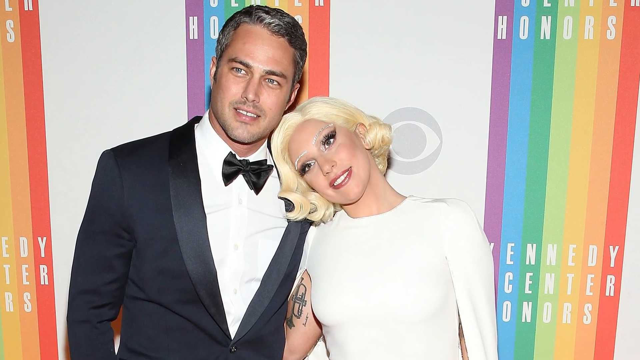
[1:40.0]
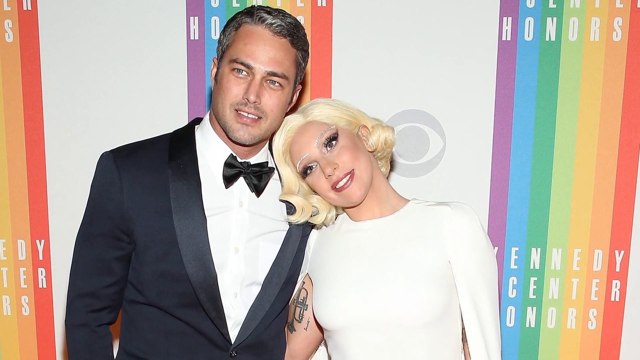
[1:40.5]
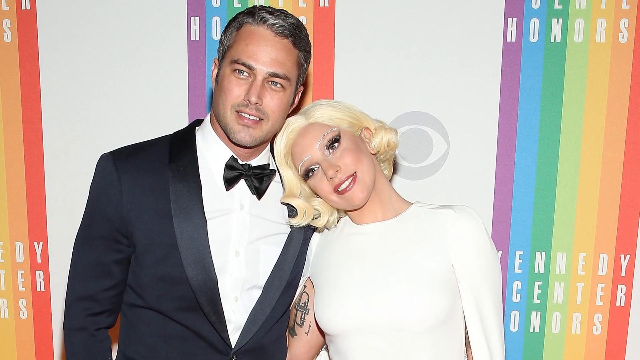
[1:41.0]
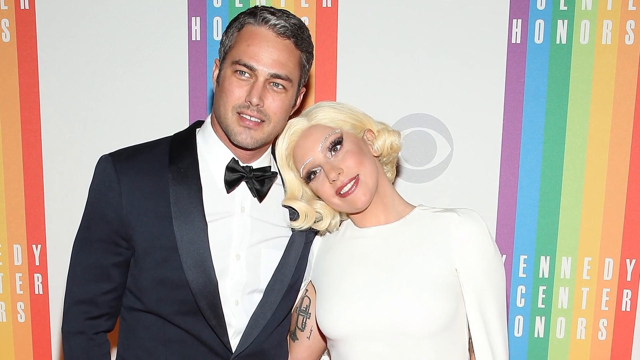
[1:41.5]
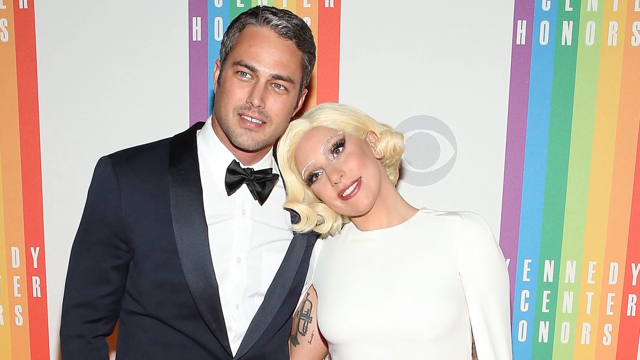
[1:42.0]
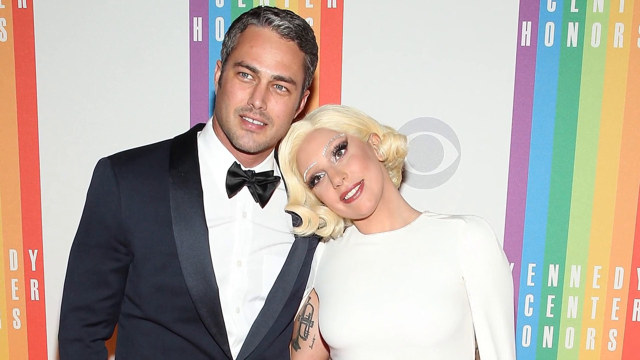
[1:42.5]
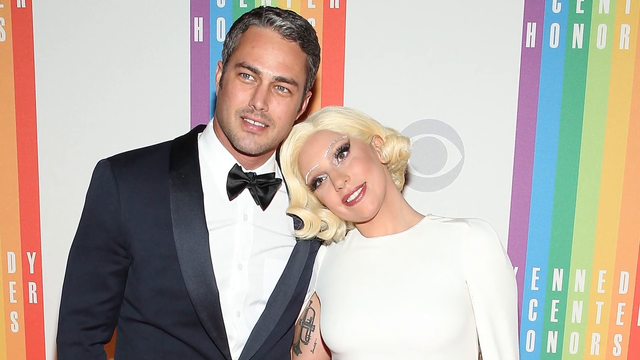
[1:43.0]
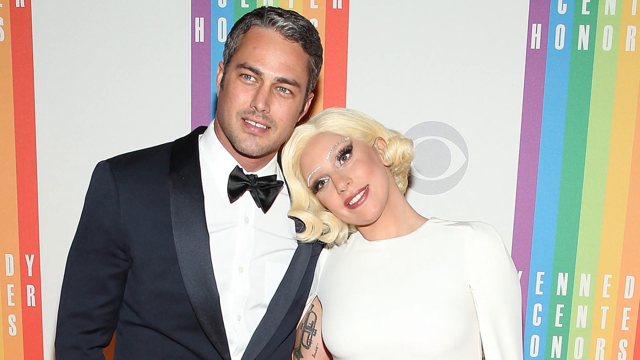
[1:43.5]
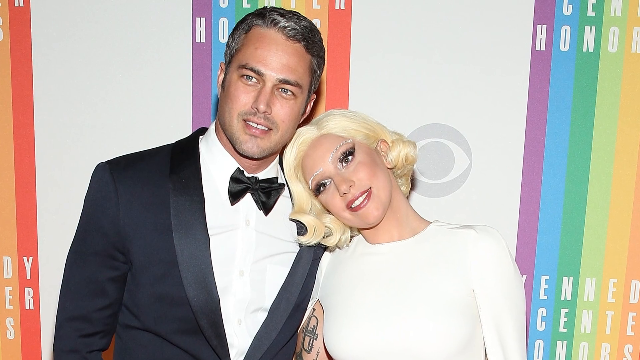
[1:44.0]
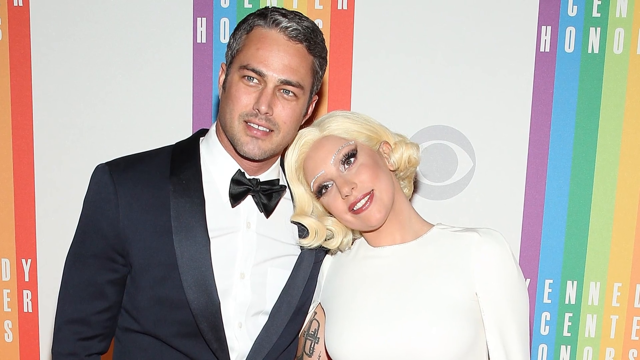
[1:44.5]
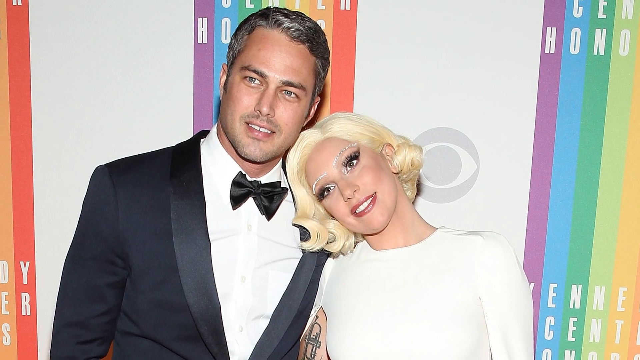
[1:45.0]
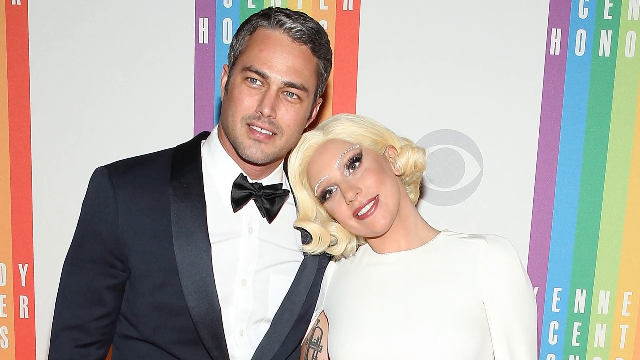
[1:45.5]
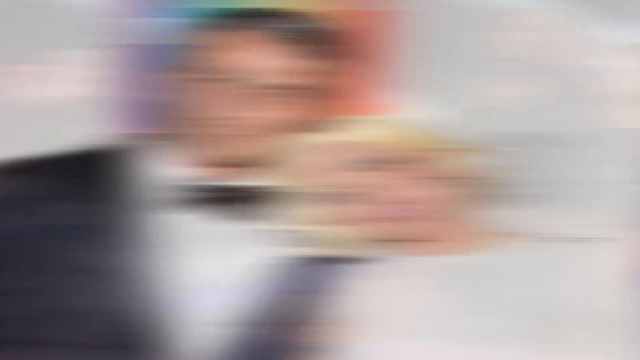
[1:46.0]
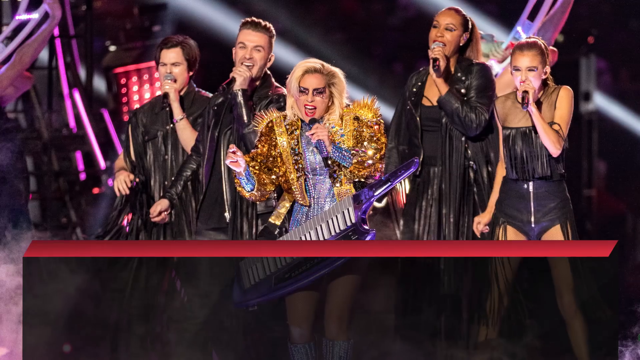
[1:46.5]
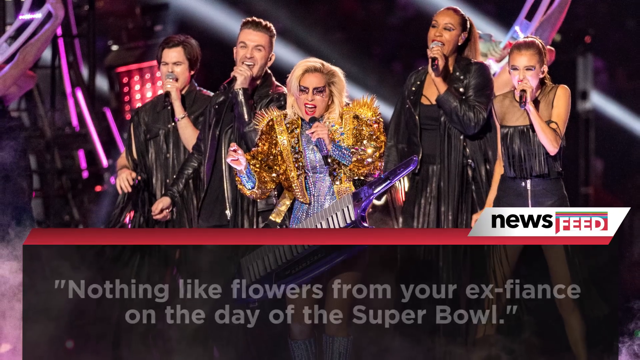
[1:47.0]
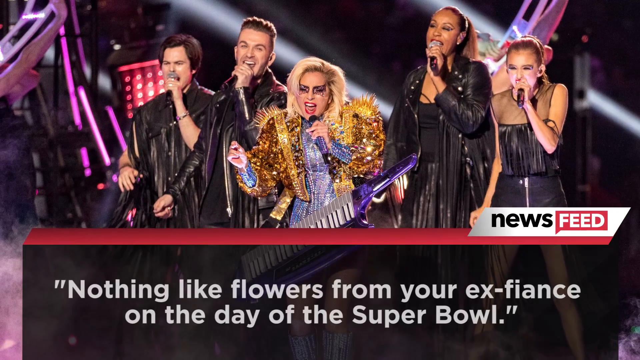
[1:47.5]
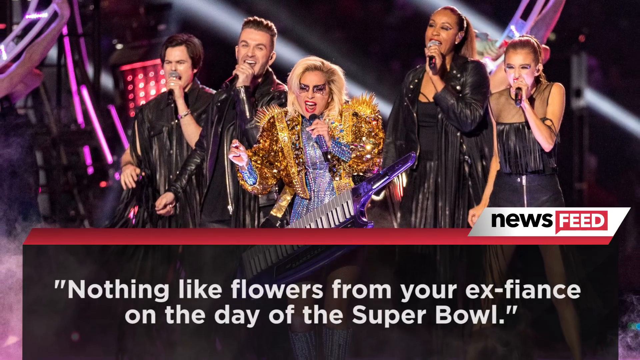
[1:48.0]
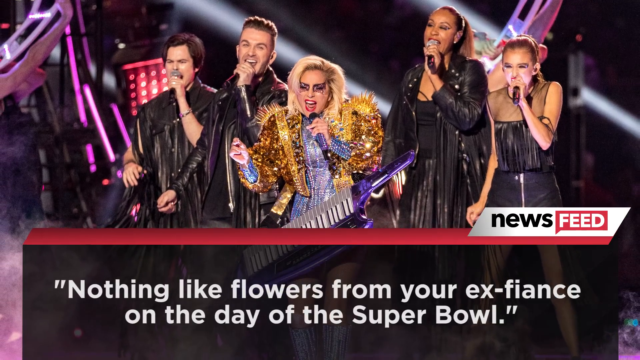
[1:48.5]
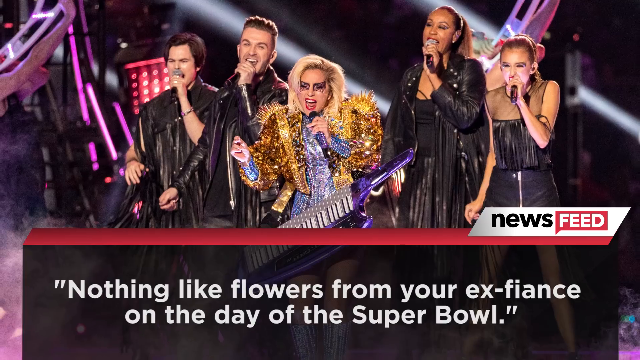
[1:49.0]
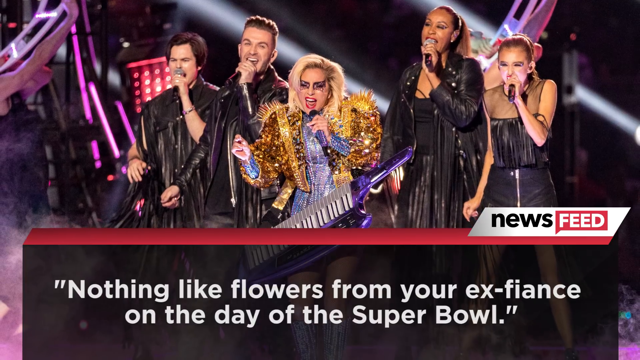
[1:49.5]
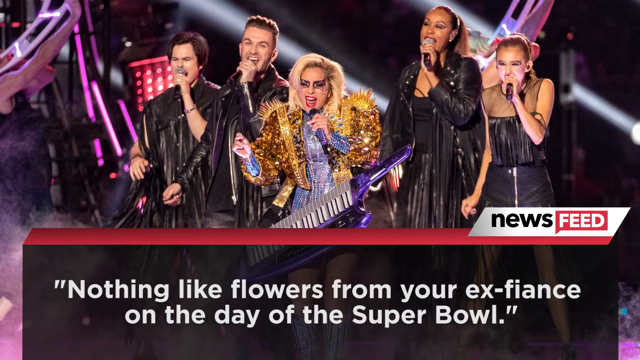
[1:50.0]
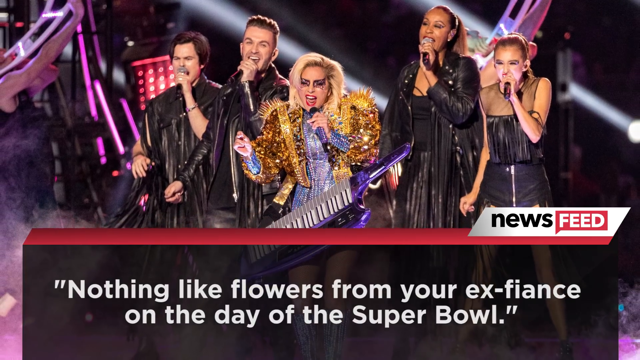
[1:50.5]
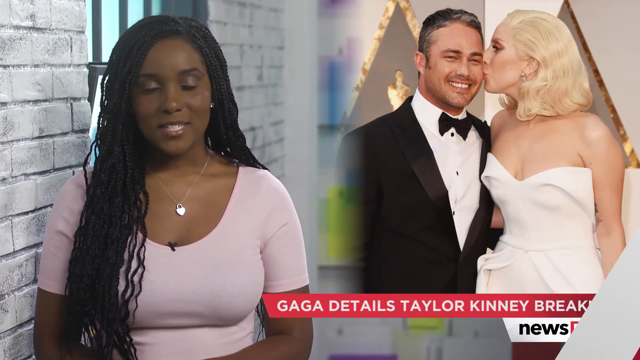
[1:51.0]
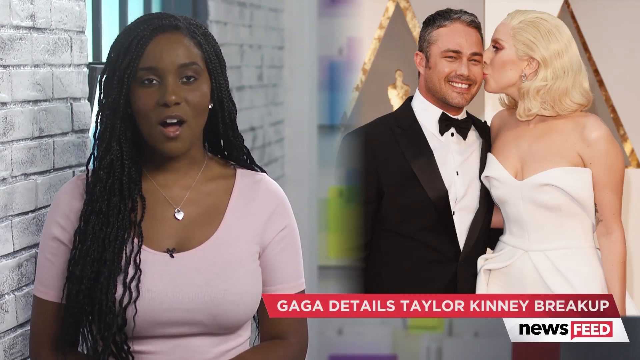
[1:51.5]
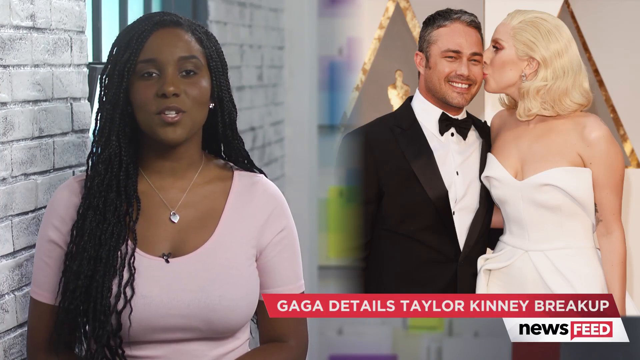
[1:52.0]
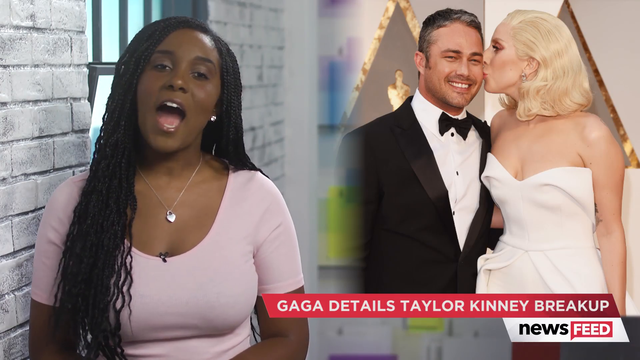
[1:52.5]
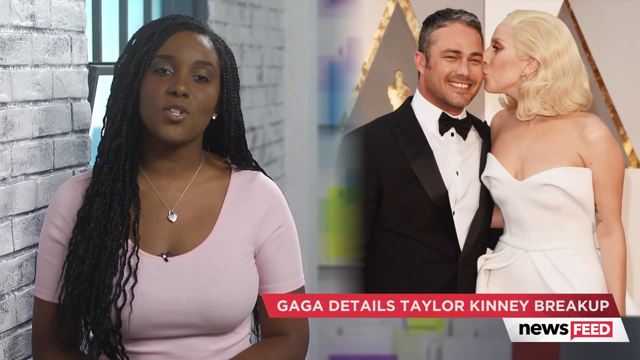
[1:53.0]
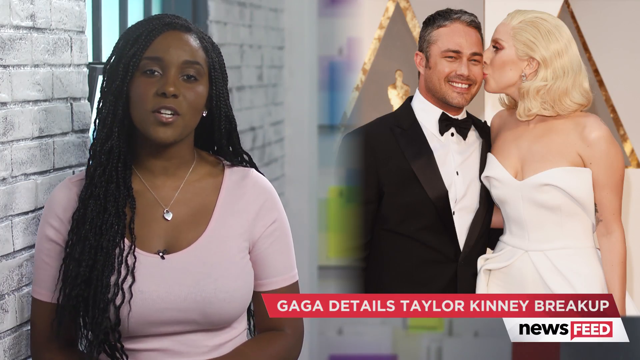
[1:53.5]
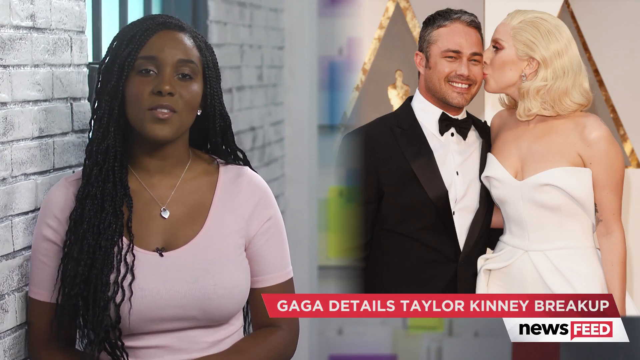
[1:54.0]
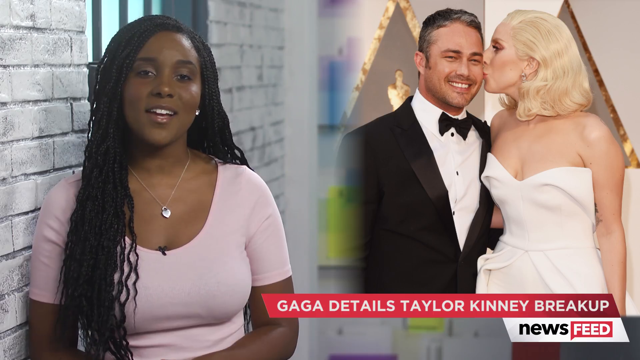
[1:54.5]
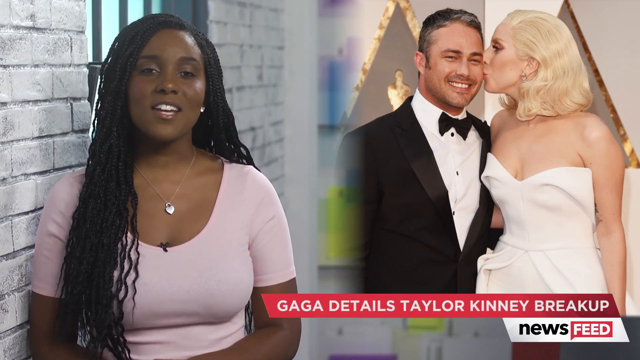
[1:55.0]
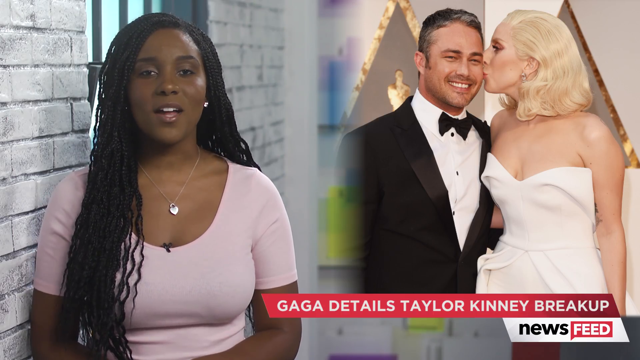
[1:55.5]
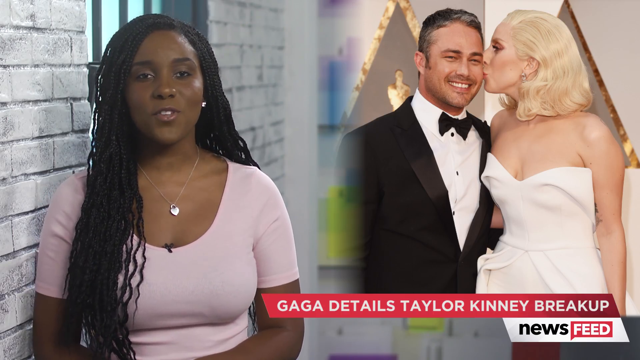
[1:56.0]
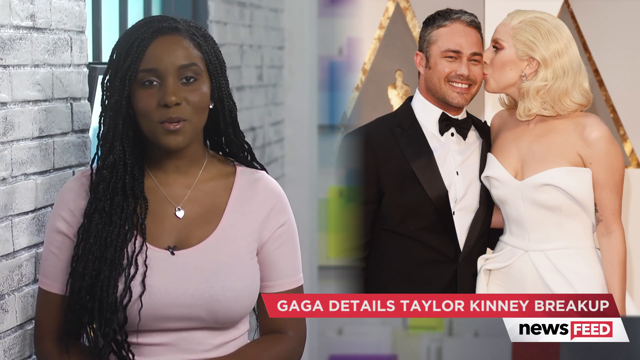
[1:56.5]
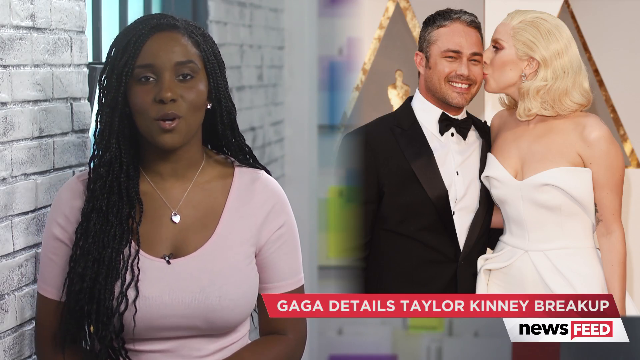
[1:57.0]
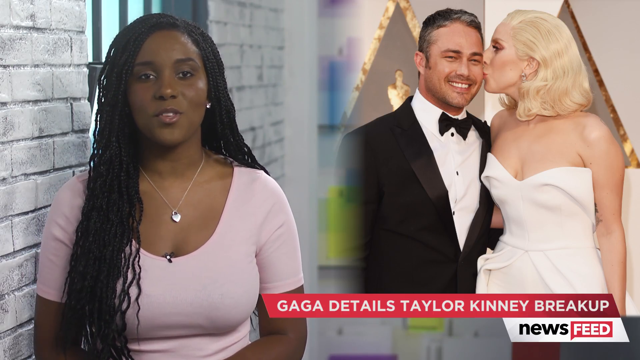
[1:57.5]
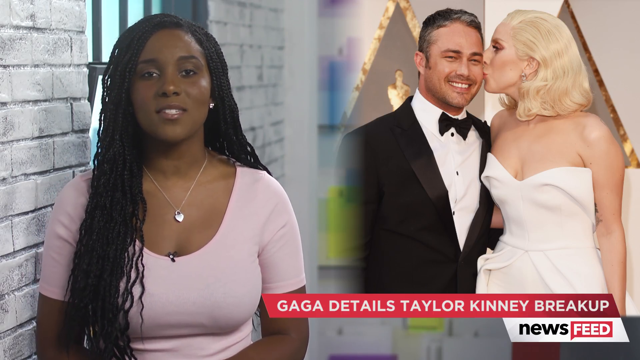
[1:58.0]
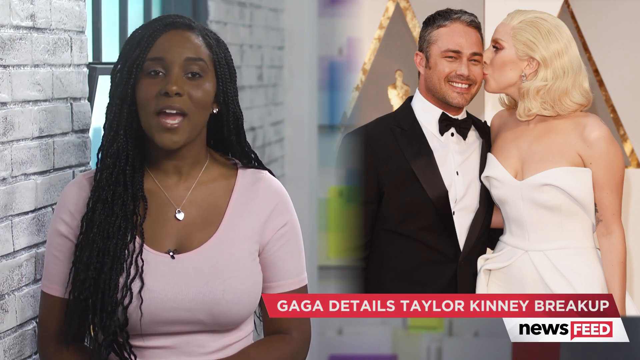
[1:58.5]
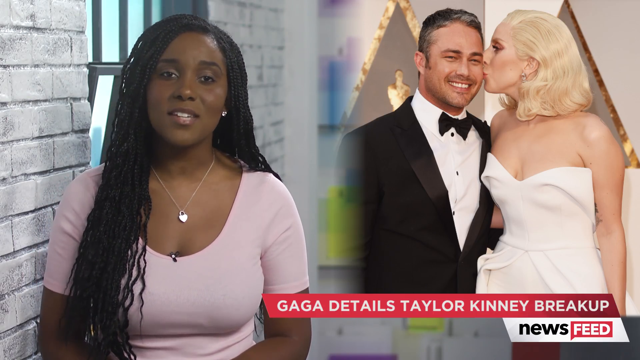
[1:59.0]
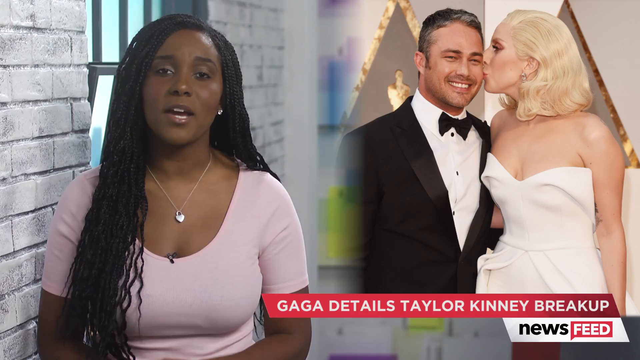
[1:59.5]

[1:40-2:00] A still image shows Lady Gaga with her romantic partner. Lady Gaga, on the right, wears a very white outfit and very heavy makeup and has very blonde hair. Her partner, on the left, wears a black suit, a white shirt underneath, and a black bow tie. Both pose in front of a white wall with rainbow patterns. The image is slowly zoomed in on, focusing on the partner's face. The screen then changes to another image of Lady Gaga on stage in very heavy metal outfits, with four singers behind her, all wearing black. A transparent black banner overlaid at the bottom says "nothing like flowers from your ex-fiancee on the day of the Super Bowl".